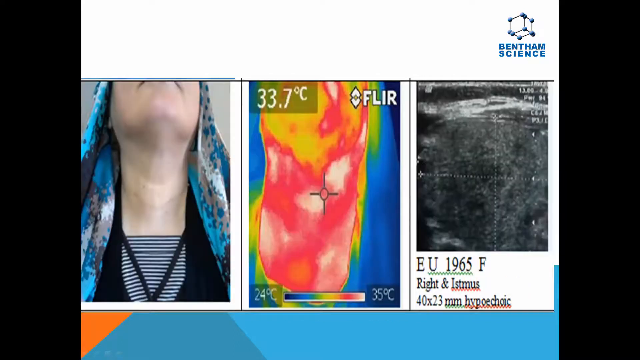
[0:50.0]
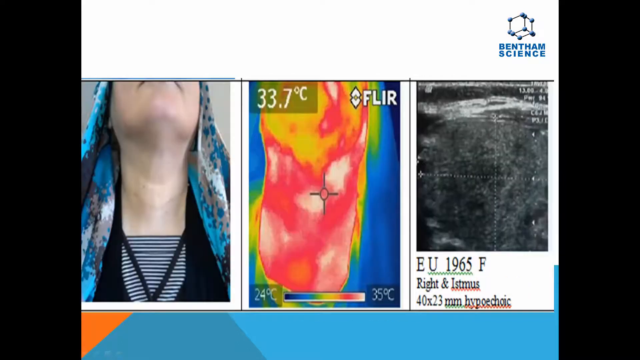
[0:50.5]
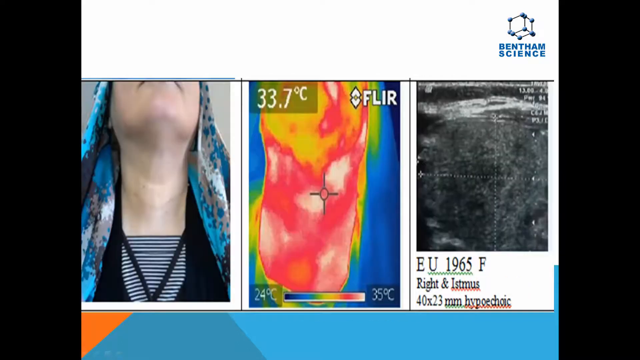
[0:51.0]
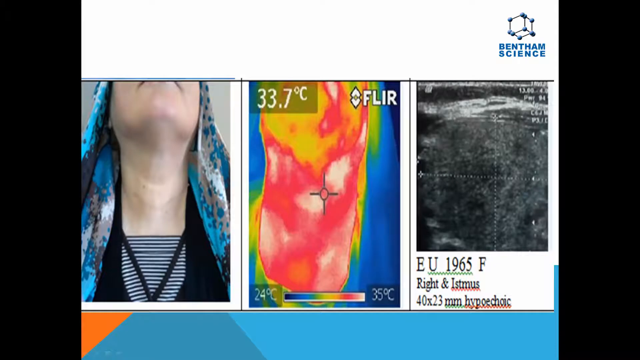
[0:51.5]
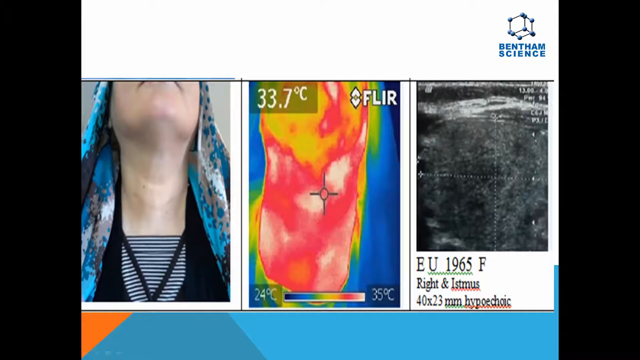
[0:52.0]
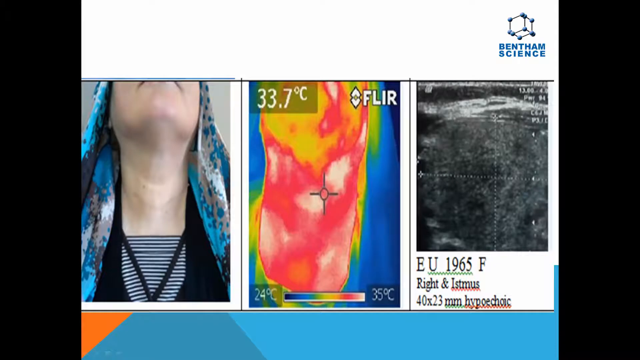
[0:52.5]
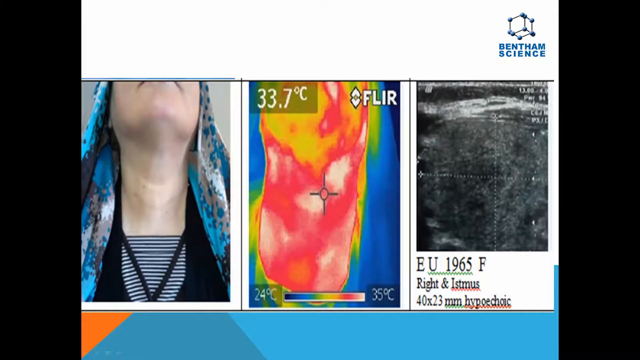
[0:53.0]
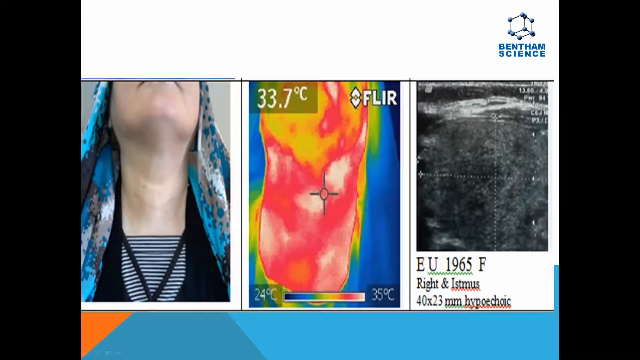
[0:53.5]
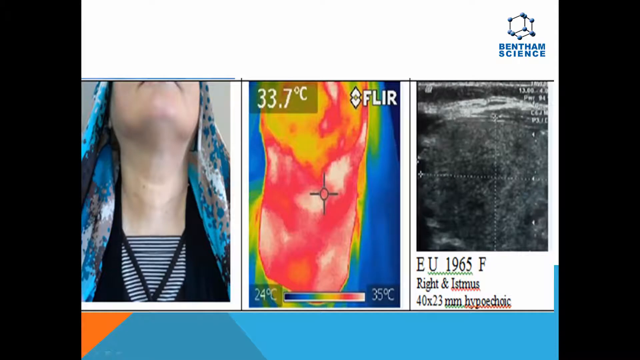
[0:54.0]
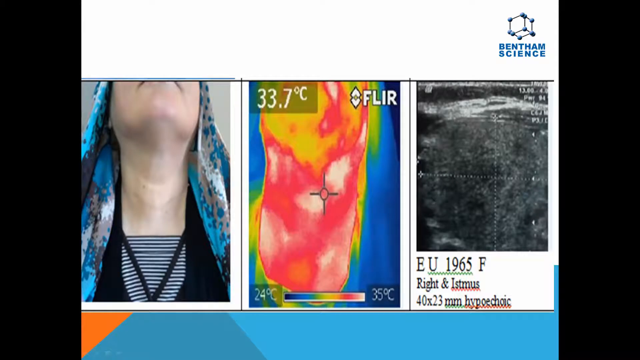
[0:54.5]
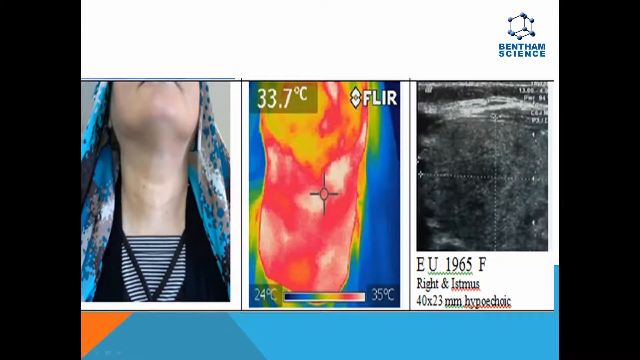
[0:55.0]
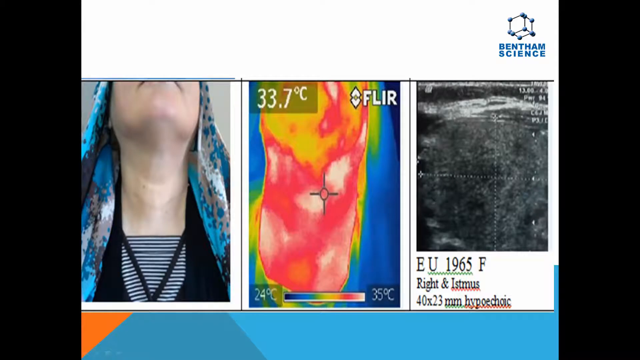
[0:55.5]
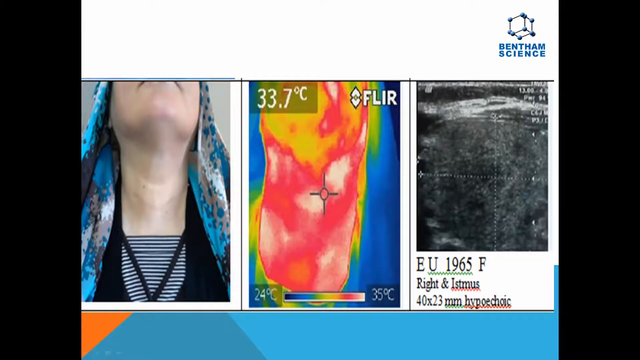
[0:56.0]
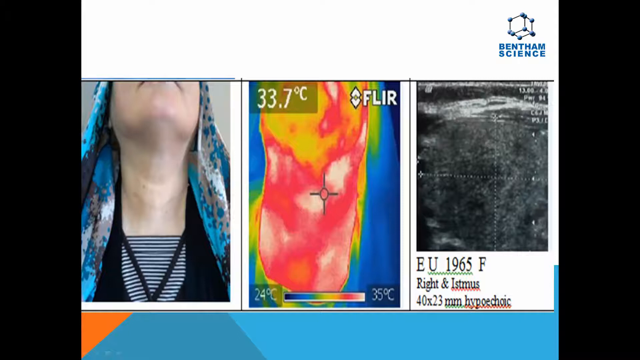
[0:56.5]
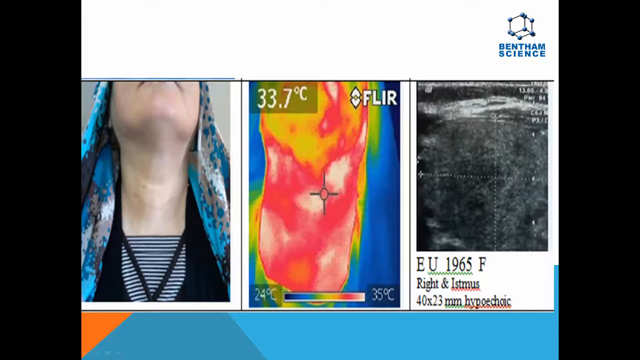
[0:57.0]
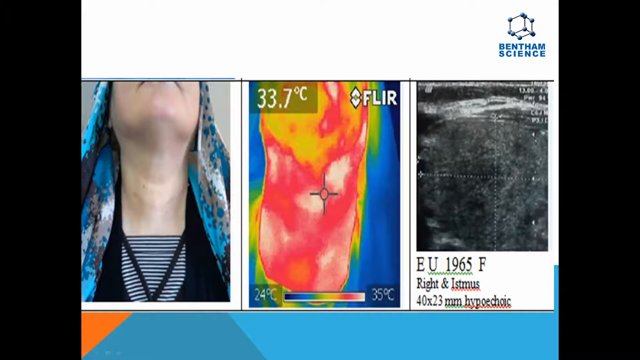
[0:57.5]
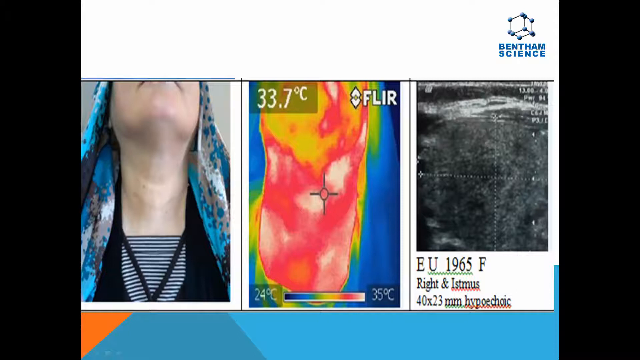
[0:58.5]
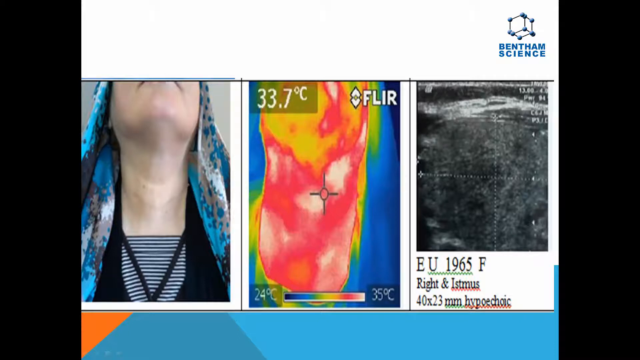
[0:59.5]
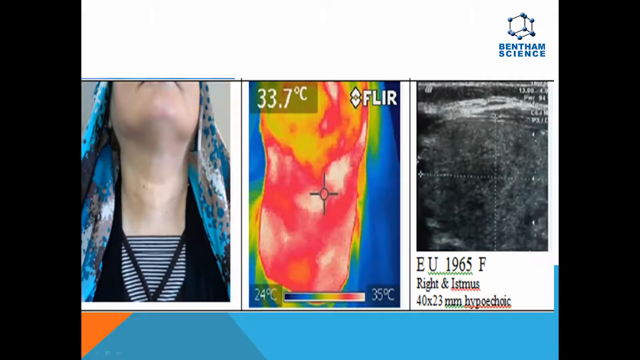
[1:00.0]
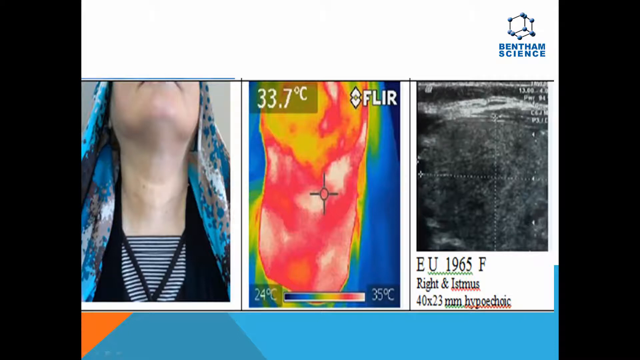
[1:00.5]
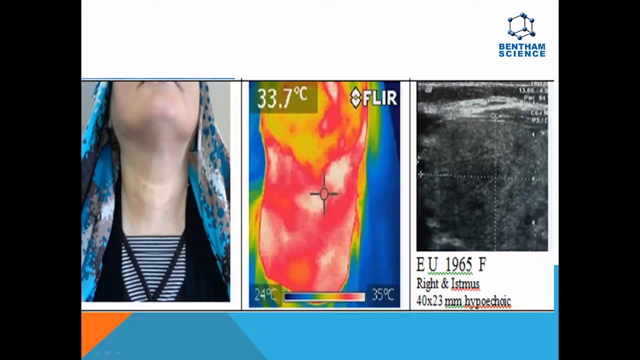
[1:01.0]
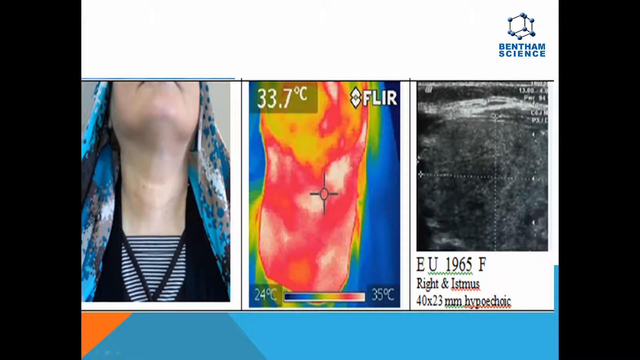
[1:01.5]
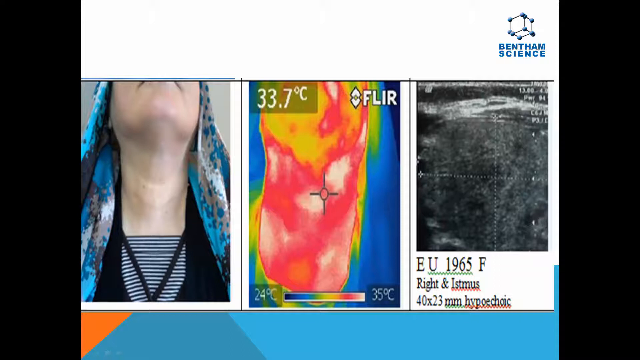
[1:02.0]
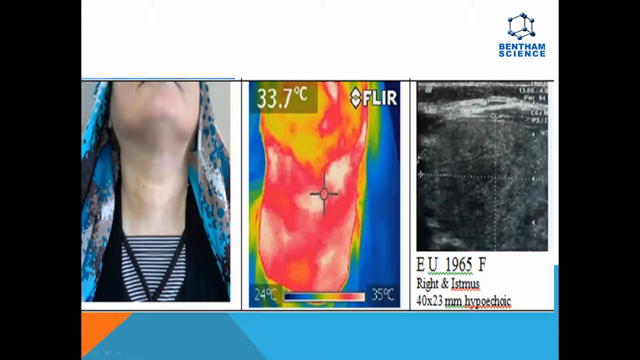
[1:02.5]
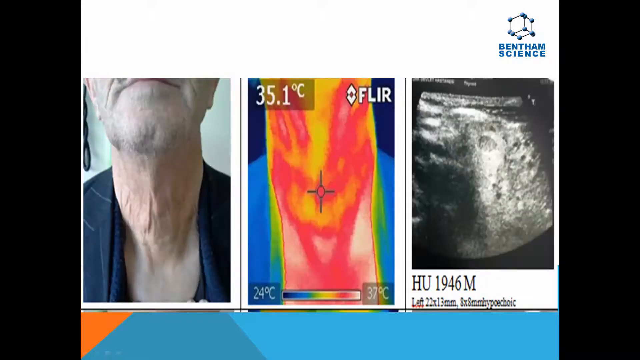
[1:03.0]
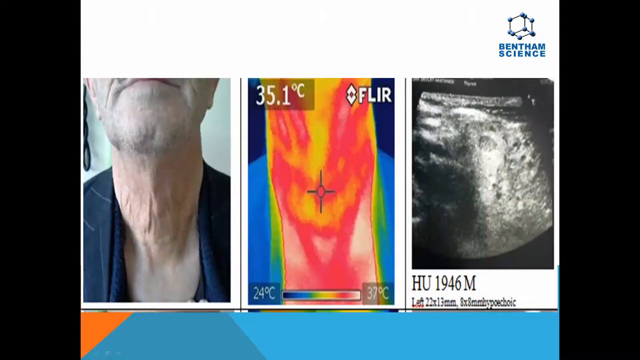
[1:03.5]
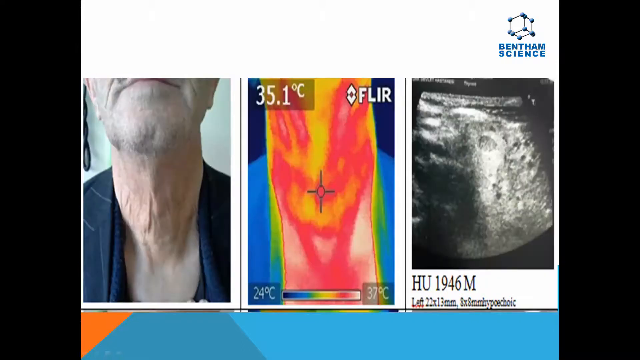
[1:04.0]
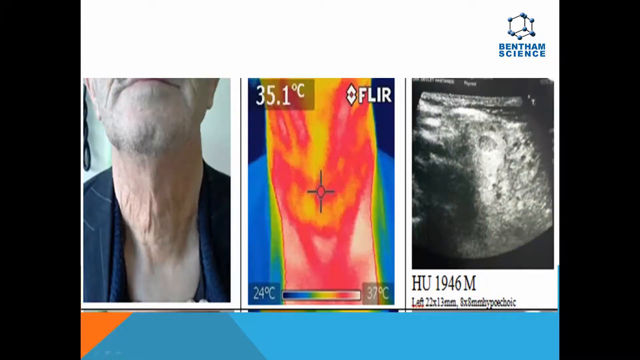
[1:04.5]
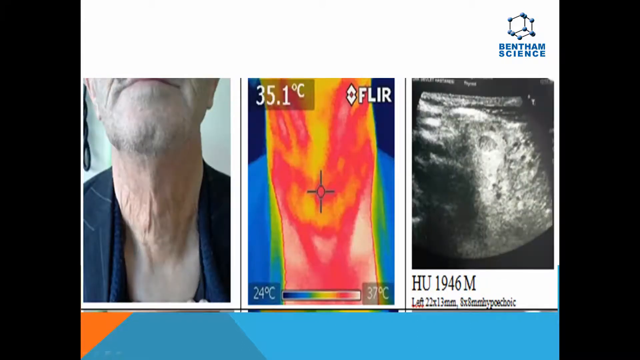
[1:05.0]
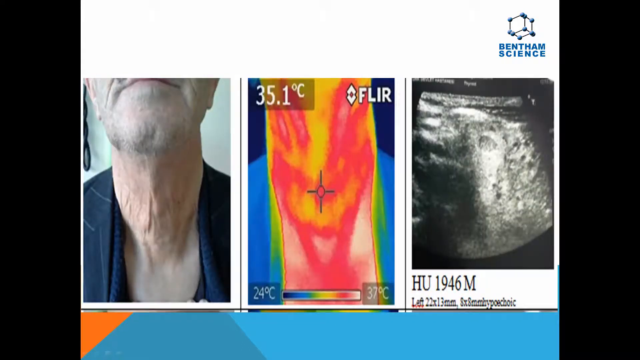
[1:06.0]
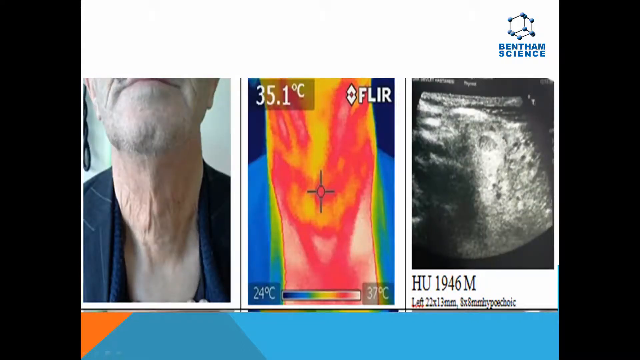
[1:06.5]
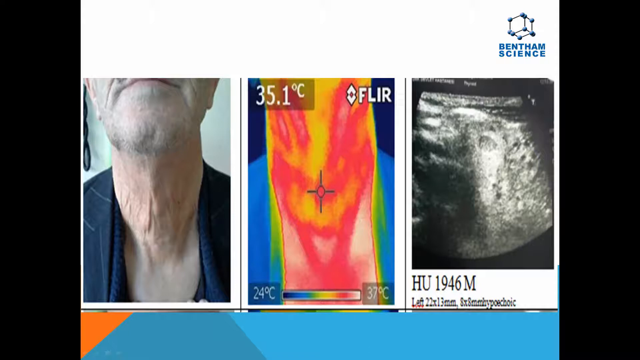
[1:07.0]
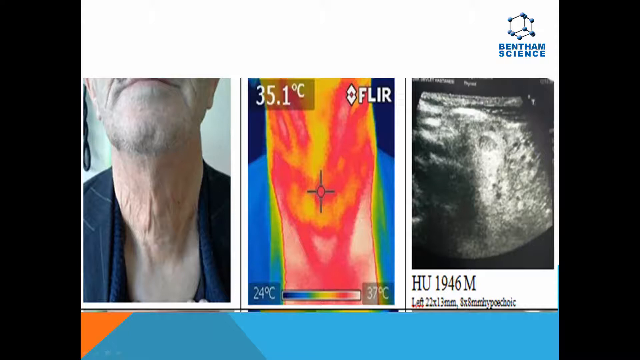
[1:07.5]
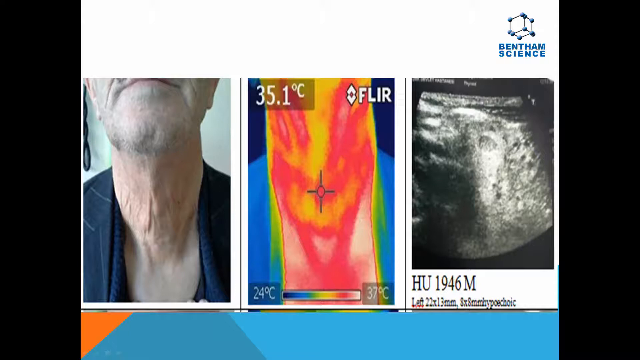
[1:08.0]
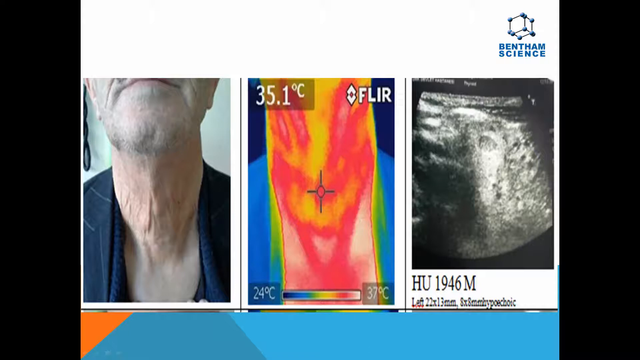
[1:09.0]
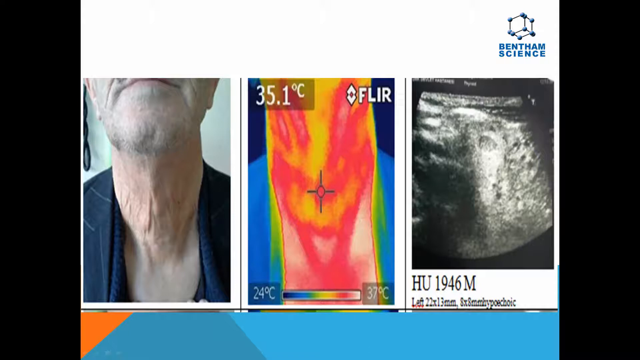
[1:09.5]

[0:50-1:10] Three pictures are side by side on a white background, with a 3D cube with little blue balls on its corners and the words "Bentham Science" underneath it. The left picture is a close-up of a woman holding her chin up, her neck exposed; nothing from her nose up is visible. She wears a silky blue and white scarf around her head and a black top with a horizontally striped blue and white shirt underneath, with two straps over the blue and white section forming a V. To the right is an infrared version of the same picture: the woman's neck is mostly red with a little white, and the clothing around her neck is green and yellow. The temperature "33.7" degrees Celsius appears in the top left, and the term "FLIR" with arrows going up and down in the top right. To the right of the infrared picture is a fuzzy, hazy black and white picture that seems to be a sonogram of the same view. Below it are the words "EU 1965F right in Isthmus 40x23mm hypoechoic". The pictures are above a blue rectangle at the bottom of the screen with a little orange to its left. The video then transitions to a similar three-picture layout of a man. The left picture shows a man with wrinkled skin from the lips down to his upper chest, his neck in the center of the photo, wearing what appears to be a black suit jacket. To the right is an infrared version of that picture, in which the man's neck is a mixture of orange and yellow and the suit jacket is mostly blue with little sections of green; the temperature "35.1" Celsius appears in the top left, and "FLIR" with an up and down arrow appears to the right. To the right of this is a black and white sonogram picture of the pictures on the left. Underneath the sonogram are the words "HU1946M" and beneath that "left 22X13MM, 8X8MM hypoechoic". The shot stays on this slide for a few seconds.